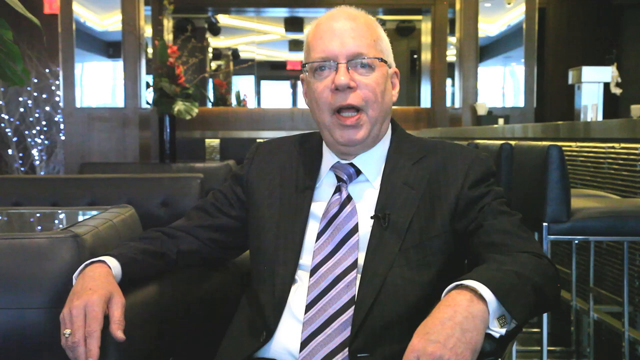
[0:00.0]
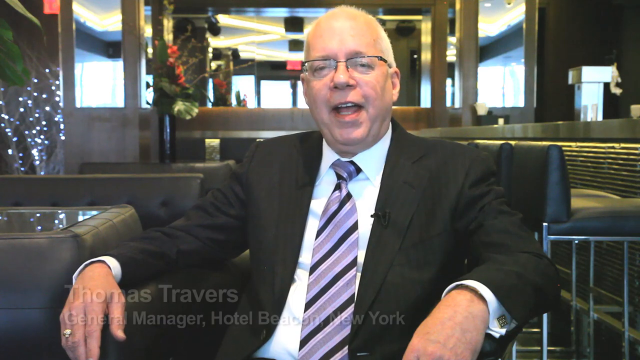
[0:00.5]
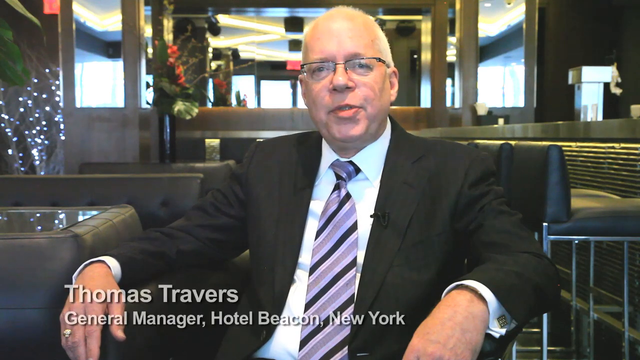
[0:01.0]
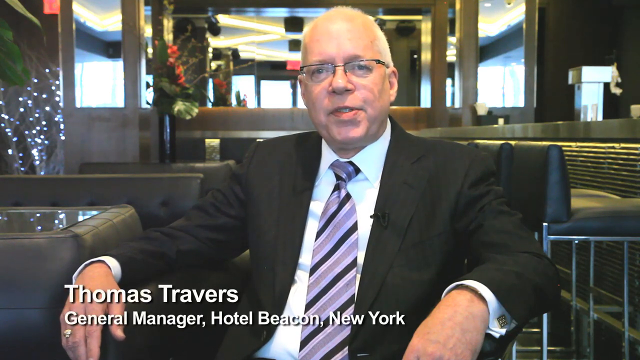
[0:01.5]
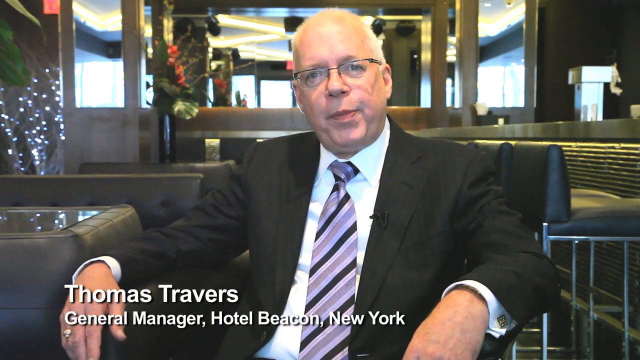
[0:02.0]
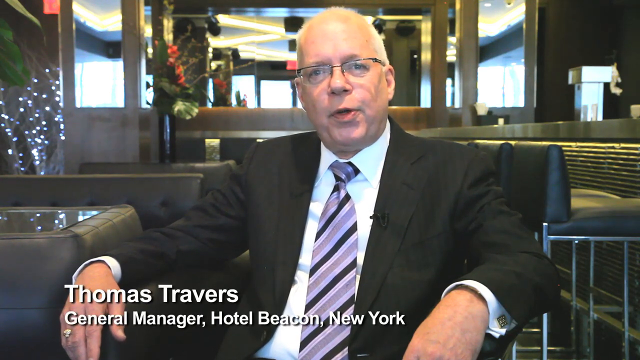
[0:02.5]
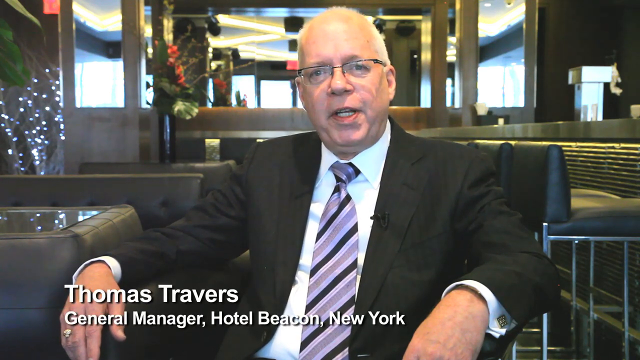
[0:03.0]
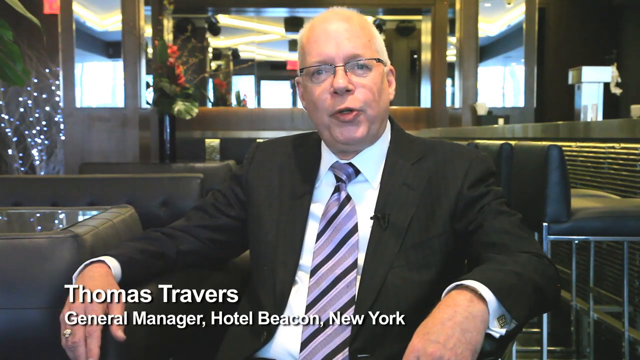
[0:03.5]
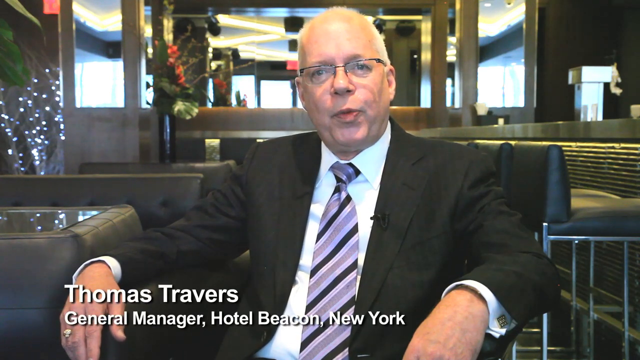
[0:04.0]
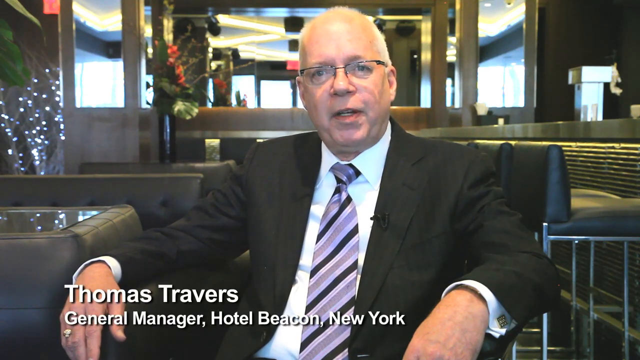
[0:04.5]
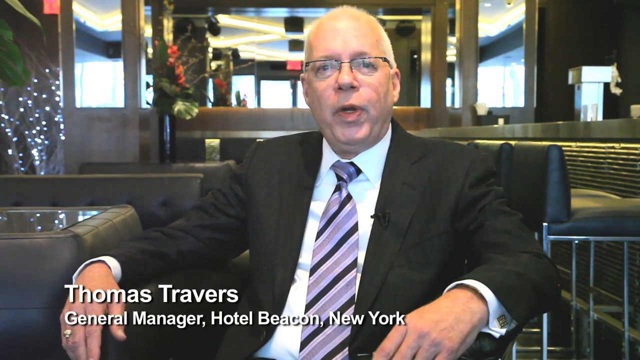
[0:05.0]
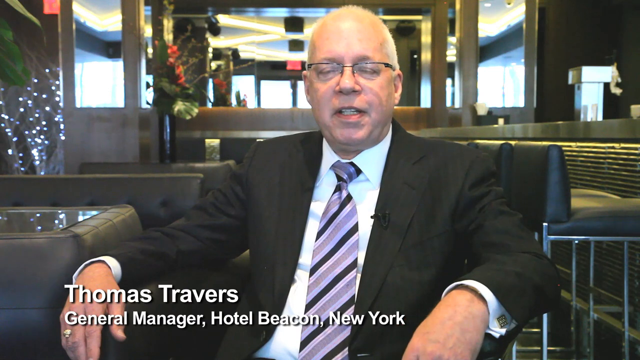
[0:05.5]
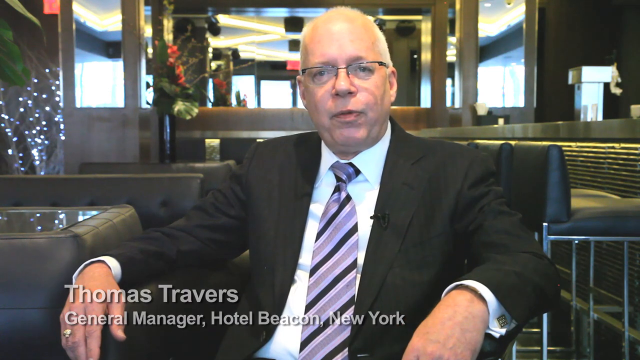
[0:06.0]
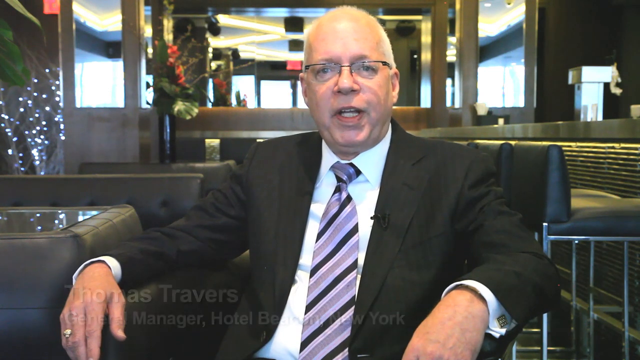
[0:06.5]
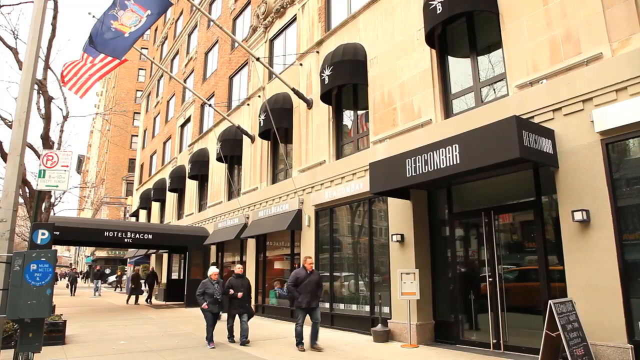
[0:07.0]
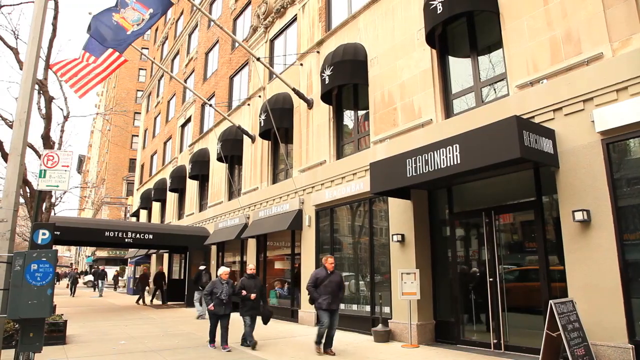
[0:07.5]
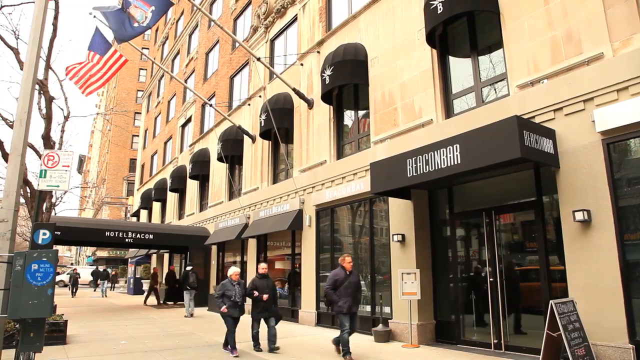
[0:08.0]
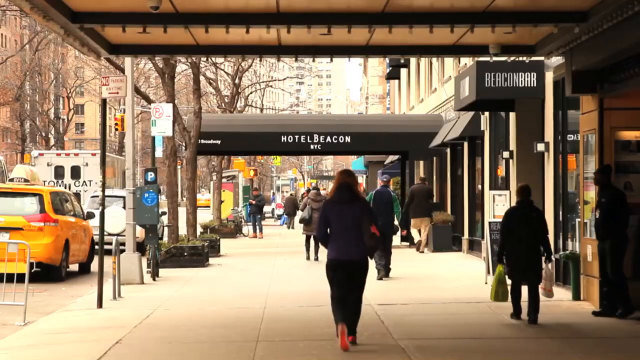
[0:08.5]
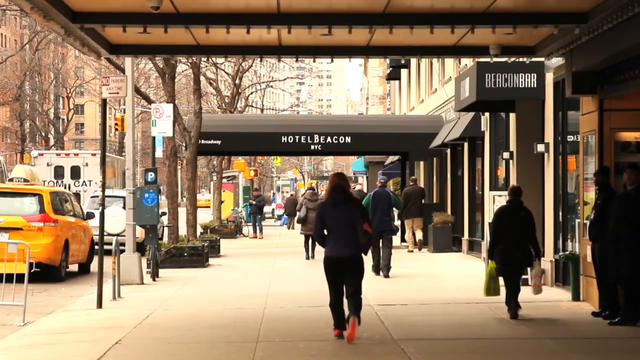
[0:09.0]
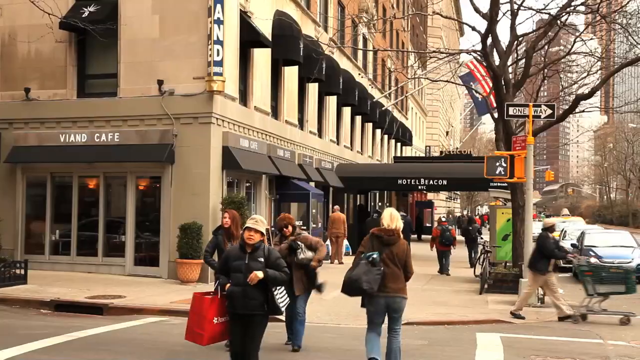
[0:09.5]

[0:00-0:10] A man in a suit and glasses sits in a very wealthy, elegant-looking room, facing the viewer and speaking. In the lower left corner, white text reads "Thomas Travers" and beneath that "General Manager, Hotel Beacon, New York." Thomas Travers sits in his chair and speaks calmly toward the viewer. The exterior of the Hotel Beacon follows, with the hotel on the right and the flags of New York and America on its top. People walk on the sidewalk to the left of the hotel. Another angle shows people walking on the sidewalk by the hotel.